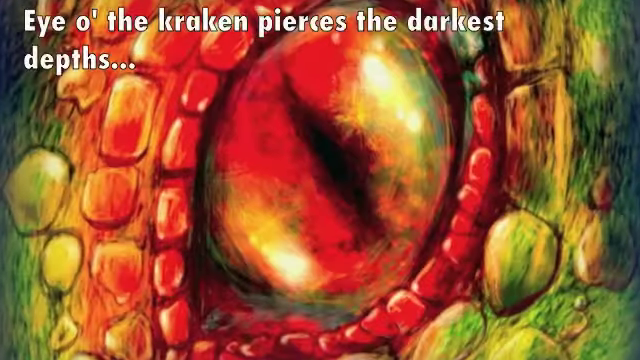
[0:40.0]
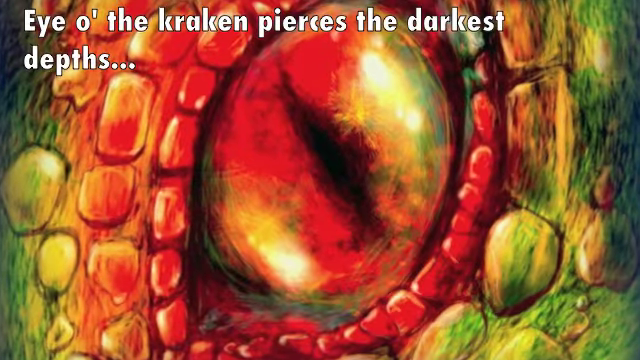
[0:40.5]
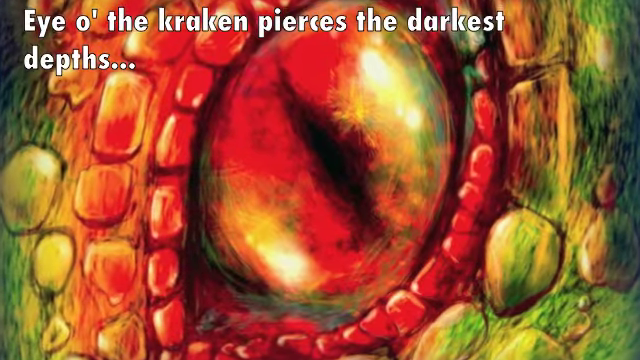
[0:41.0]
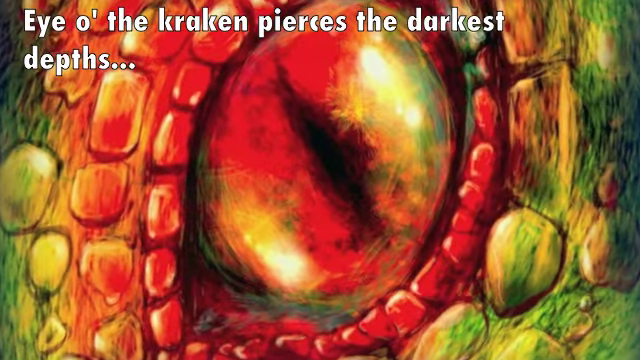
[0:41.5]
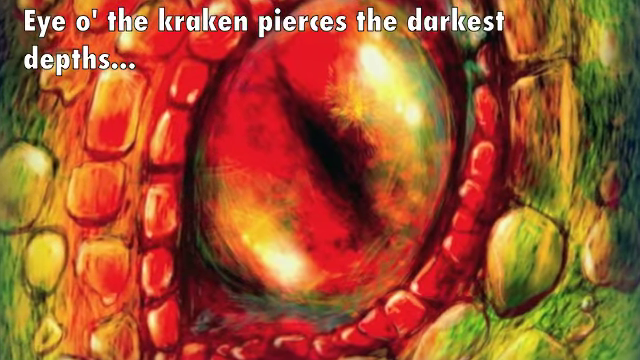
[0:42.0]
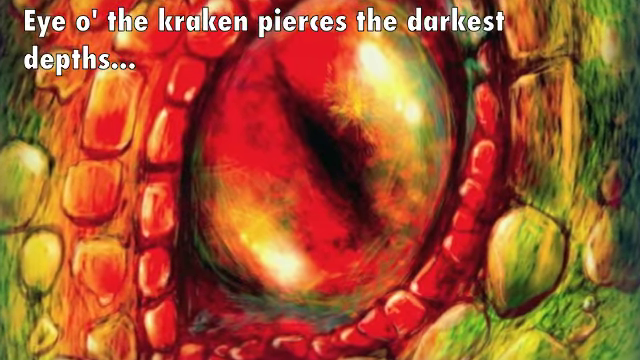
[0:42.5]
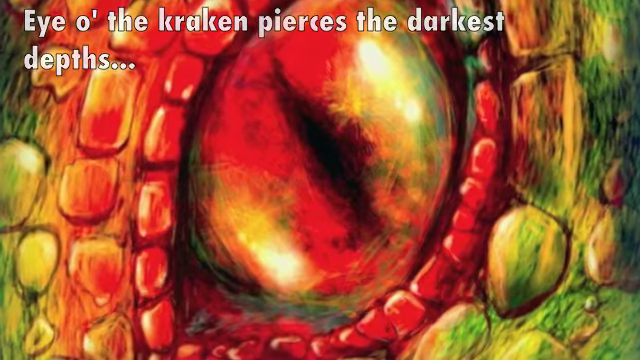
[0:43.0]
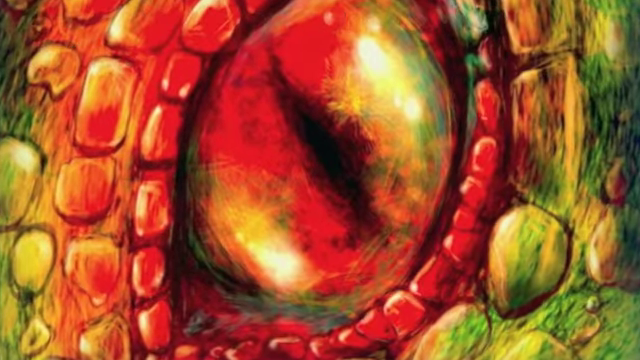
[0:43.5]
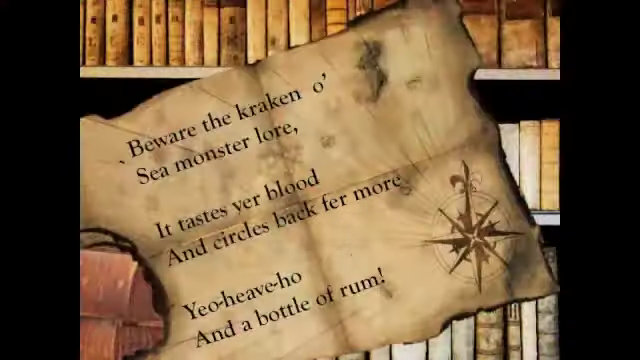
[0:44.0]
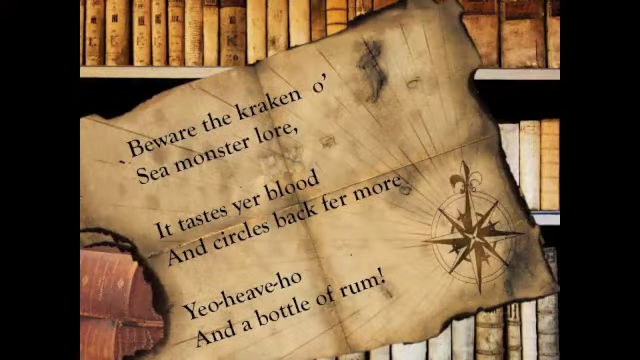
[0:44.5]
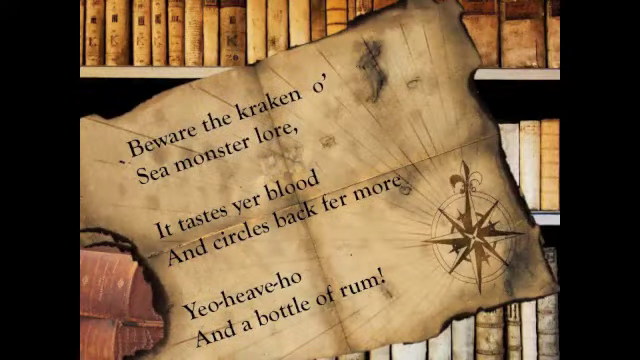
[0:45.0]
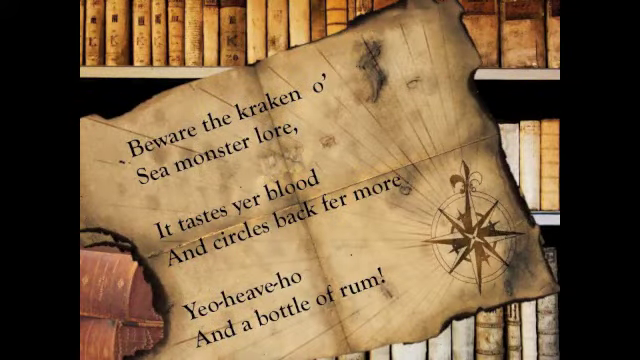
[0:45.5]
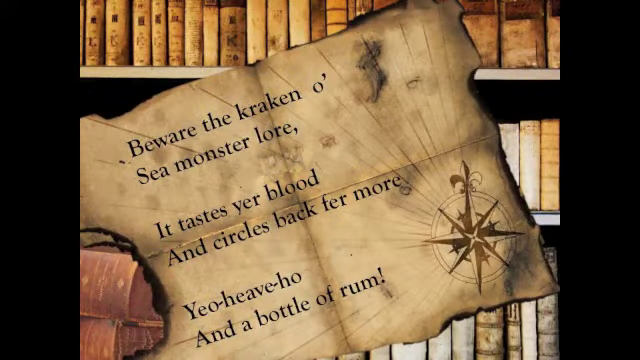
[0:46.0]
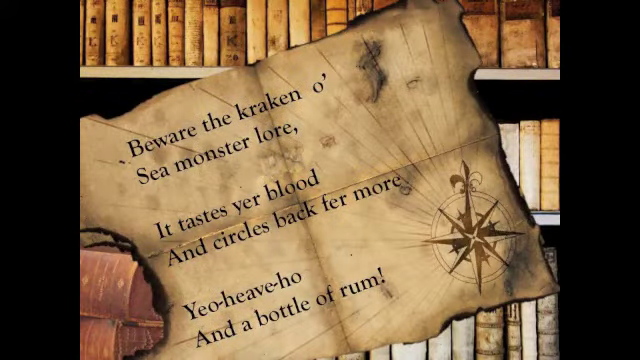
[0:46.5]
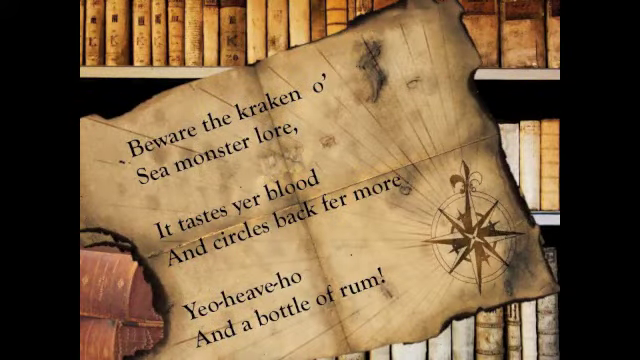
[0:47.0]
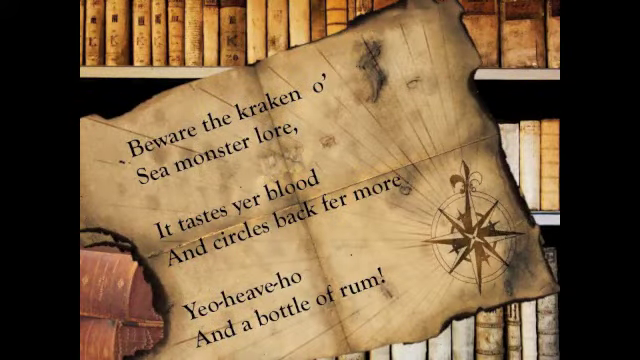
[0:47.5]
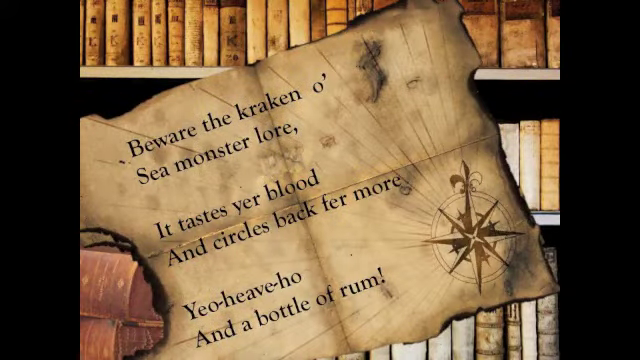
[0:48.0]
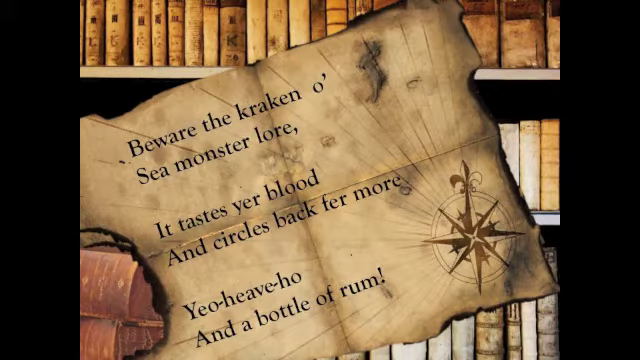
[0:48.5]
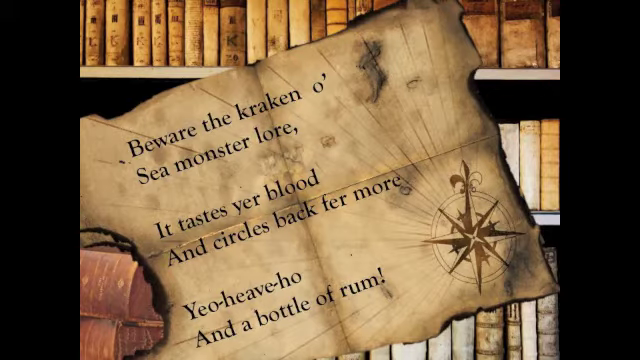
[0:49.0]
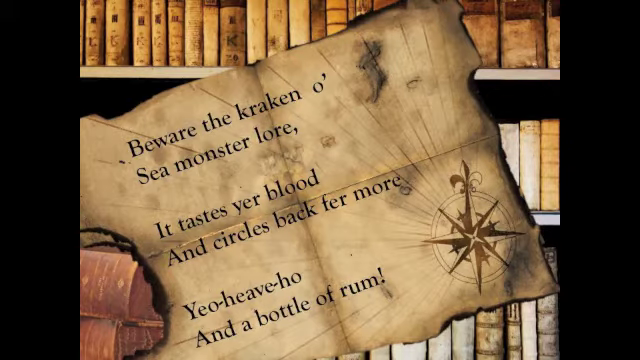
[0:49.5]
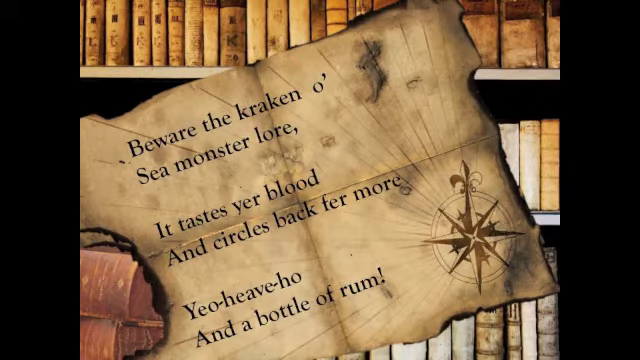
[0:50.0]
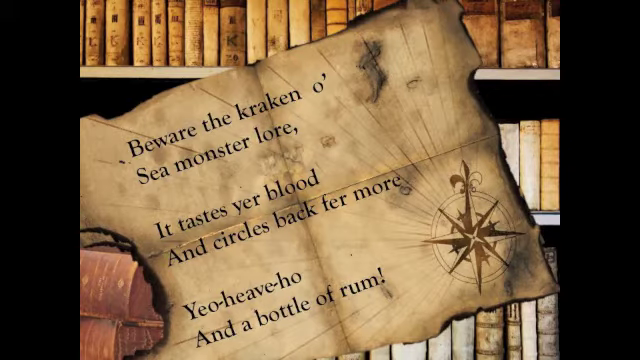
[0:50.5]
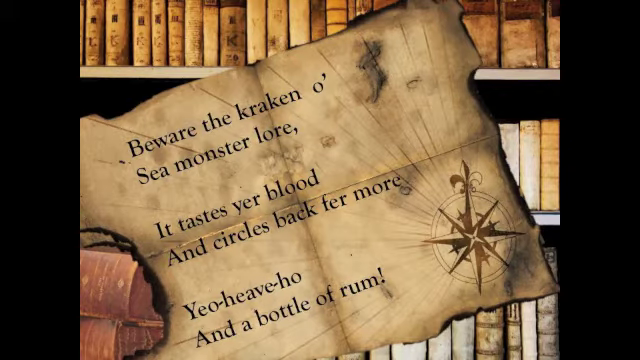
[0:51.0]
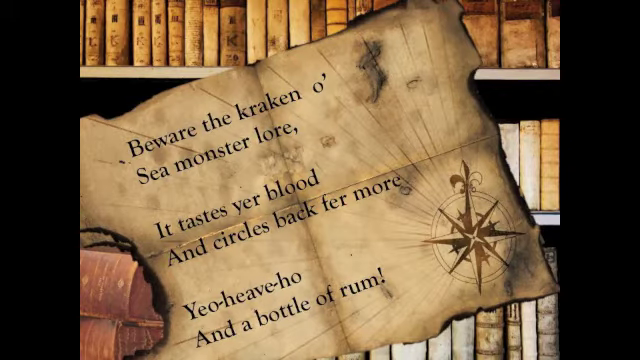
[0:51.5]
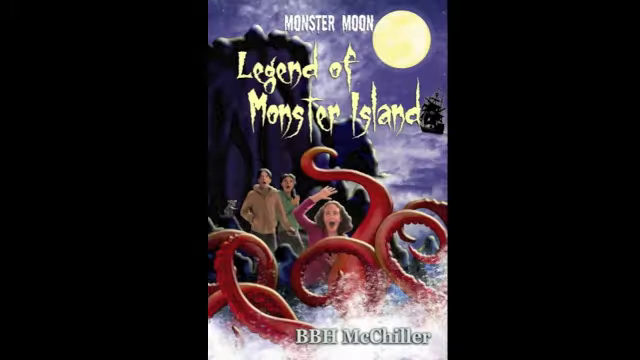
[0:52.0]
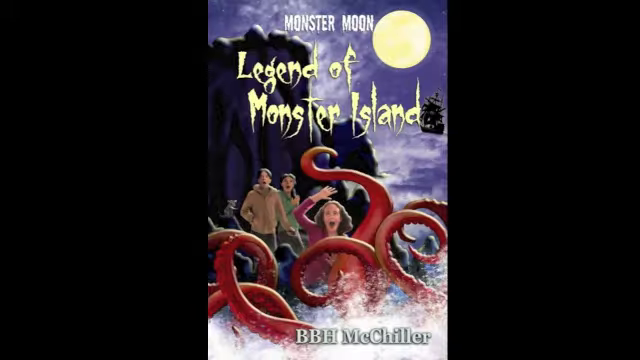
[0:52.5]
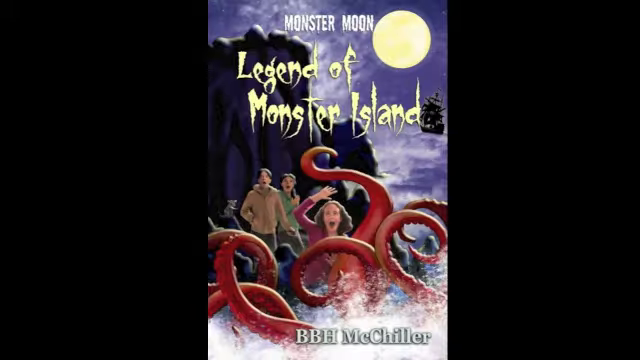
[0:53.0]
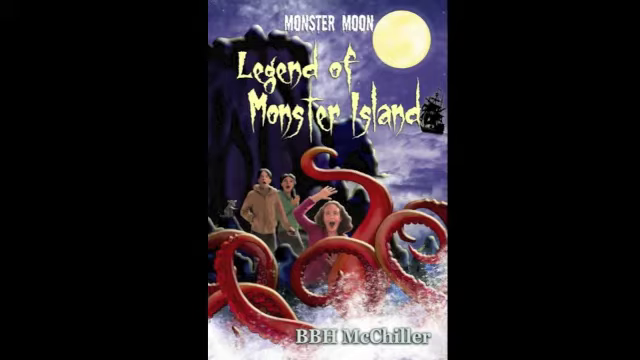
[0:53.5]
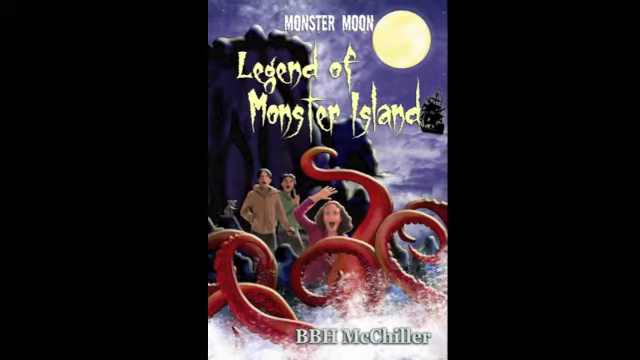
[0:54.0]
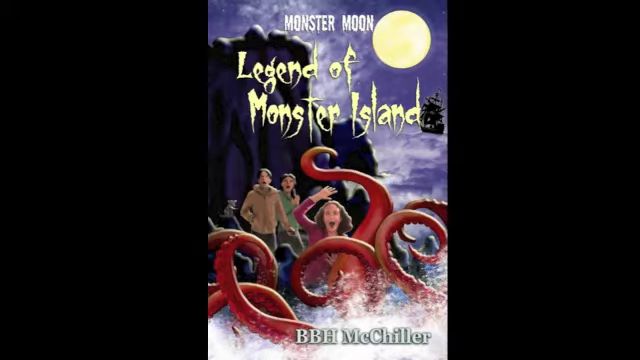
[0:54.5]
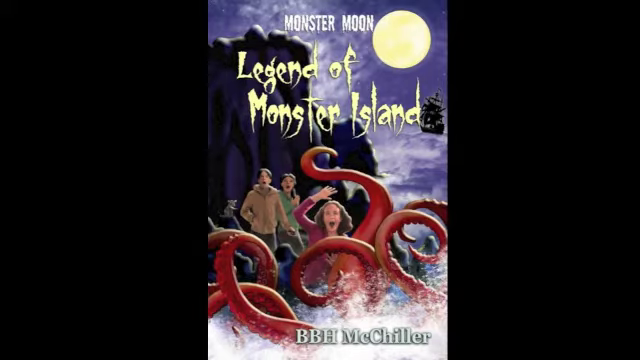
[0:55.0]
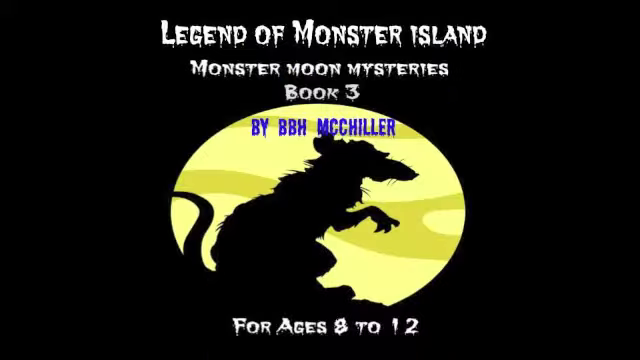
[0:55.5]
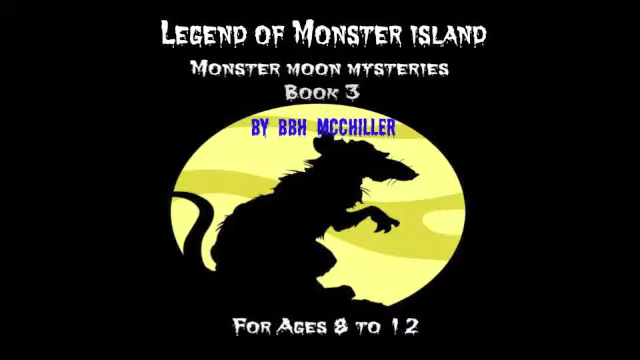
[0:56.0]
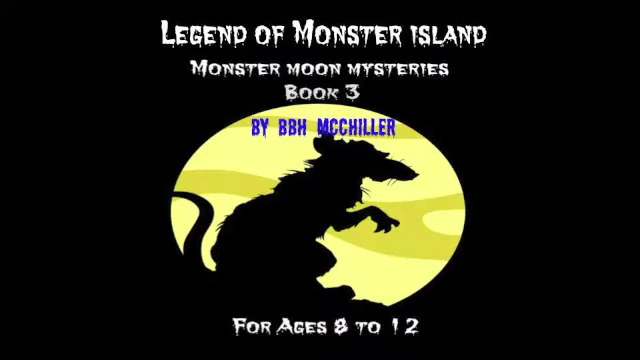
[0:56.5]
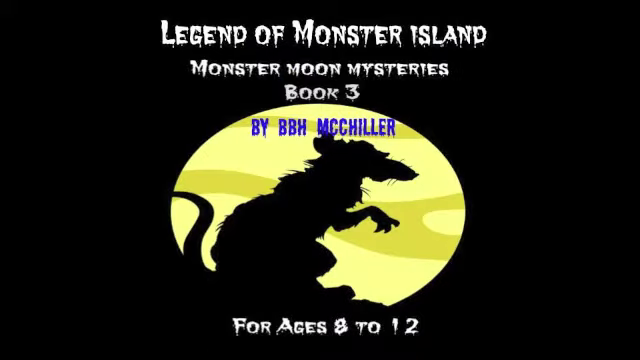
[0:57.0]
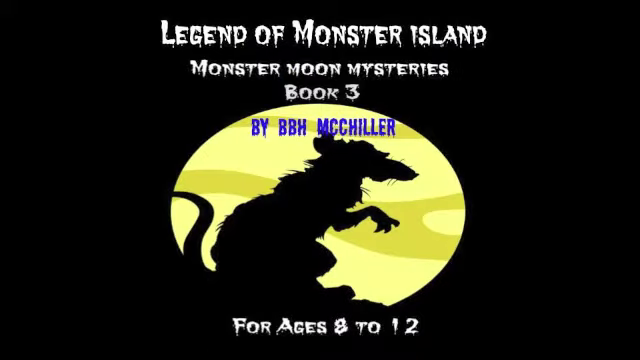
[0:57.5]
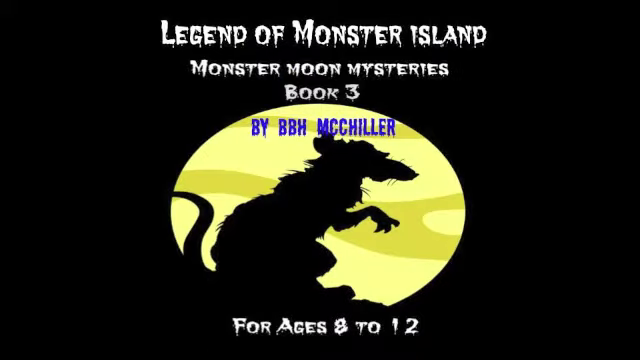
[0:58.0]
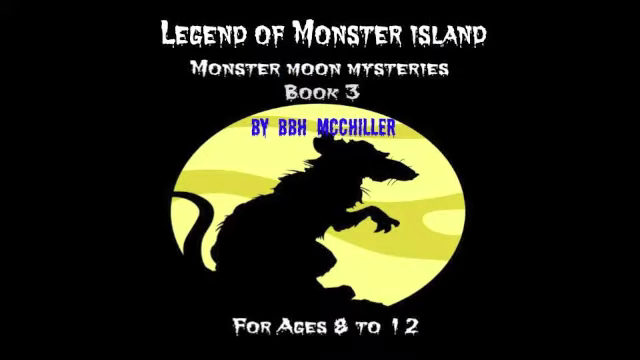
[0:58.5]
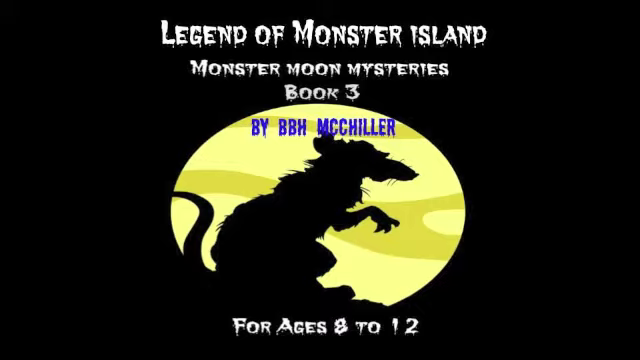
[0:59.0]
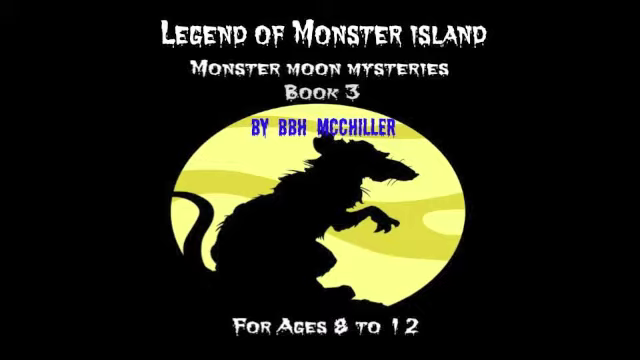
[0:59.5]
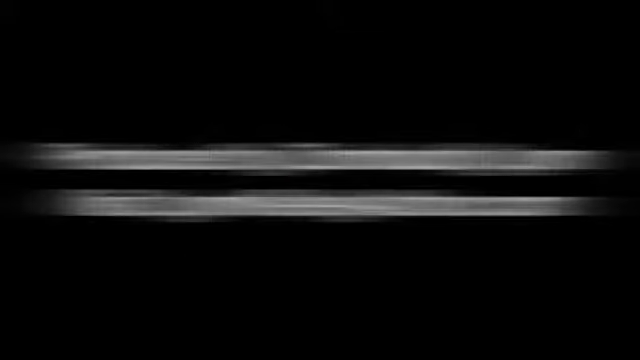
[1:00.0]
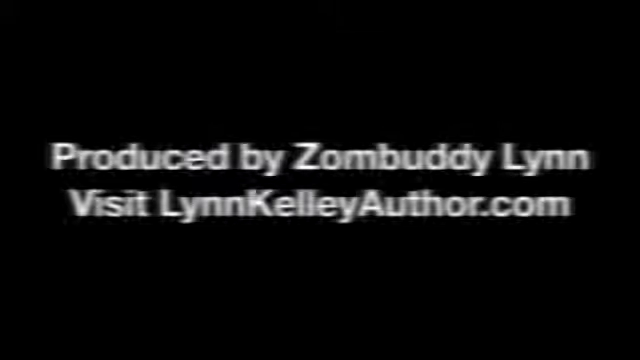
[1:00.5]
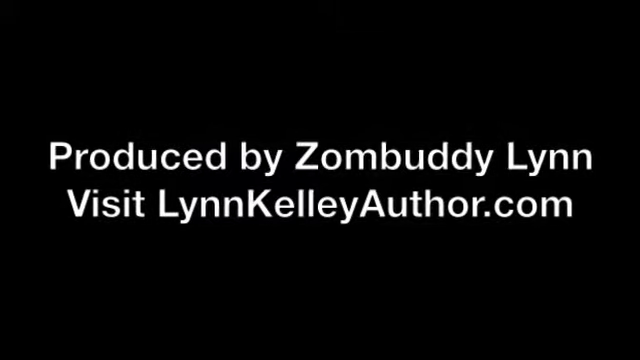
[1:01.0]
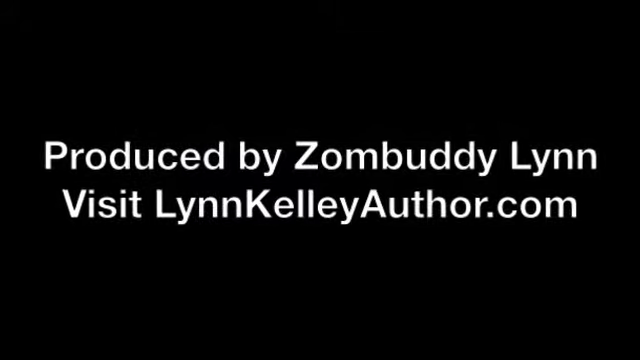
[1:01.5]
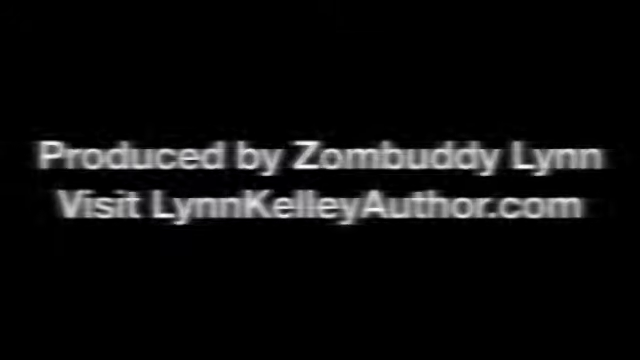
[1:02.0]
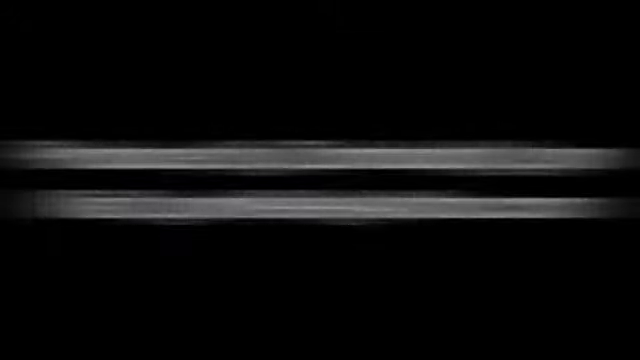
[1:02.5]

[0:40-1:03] The image of the eye of the kraken continues. It is very colorful, with scales: red scales around the eye shifting to orange, and a green outline, which makes it possibly look like a dragon image, though the text says it is a kraken. The video then cuts to a cartoon drawing of an old treasure map with a compass drawn on it; text on the map begins "Beware the kraken" and ends "and a bottle of rum", a kind of pirate warning message. Next comes what looks like a book cover with "monster moon" at the very top and a moon to the right of the title. The sky is purplish with white clouds, dark but bright, and on the left is something like a gigantic cave or cliff into the sea. A girl in purple is screaming with her right hand above her head as she views a kraken, or an octopus, in front of the screen, with six tentacles visible. Behind her to the left is a guy in a brown shirt, and to the right of that guy is another girl in a green hoodie-like top. The video then cuts to another image reading "Legend of monster island monster moon mysteries book three", apparently about another book, with "For ages 8 to 12" at the bottom. The video ends with text saying it is produced by zombuddy lynn and a website address for the author.